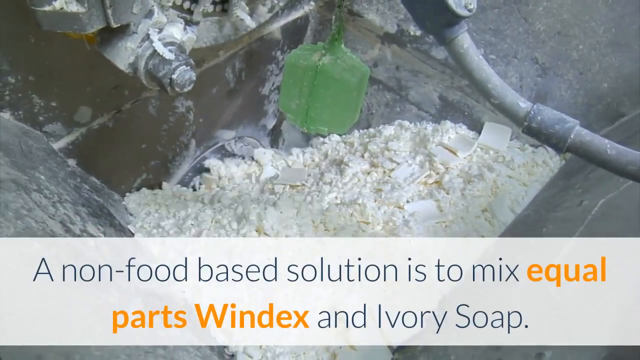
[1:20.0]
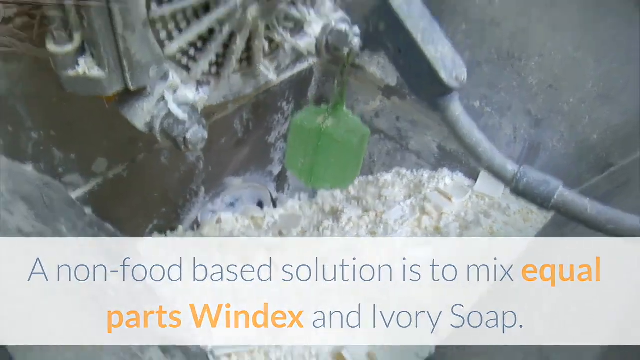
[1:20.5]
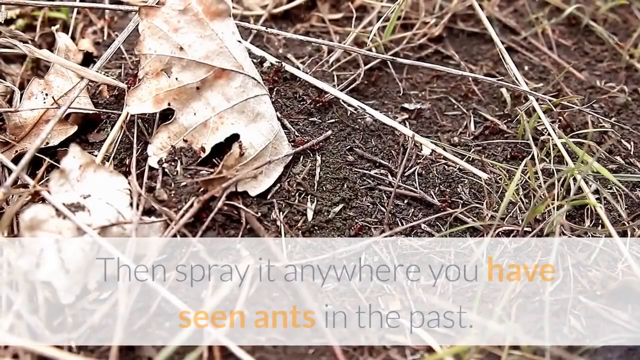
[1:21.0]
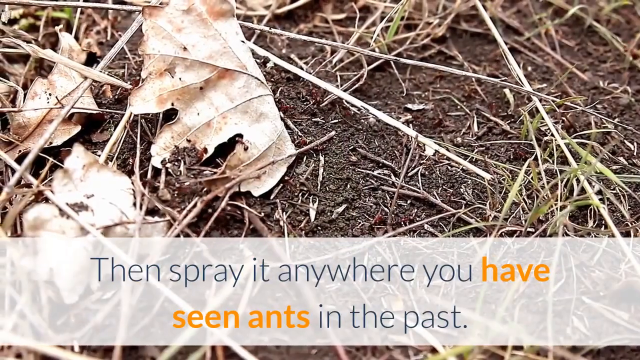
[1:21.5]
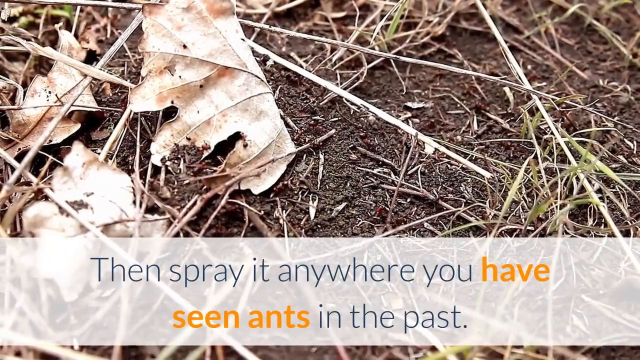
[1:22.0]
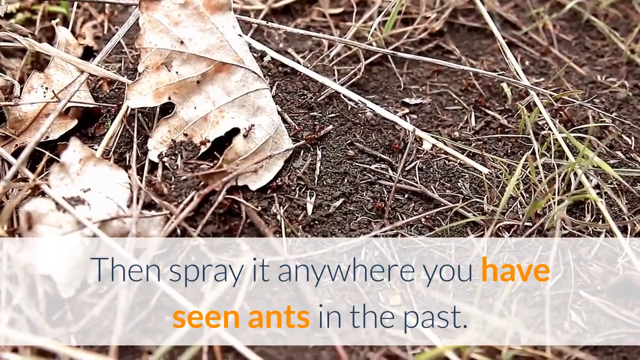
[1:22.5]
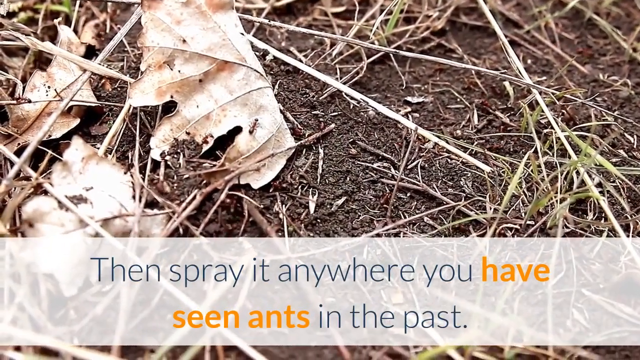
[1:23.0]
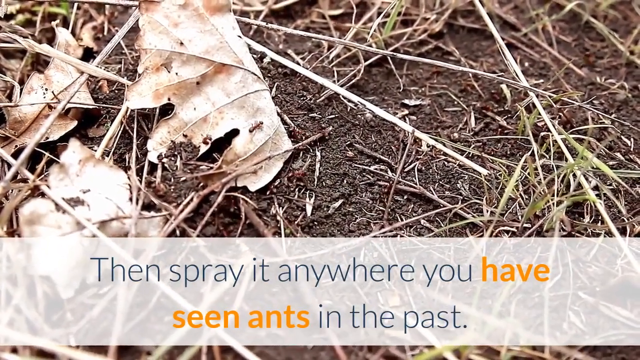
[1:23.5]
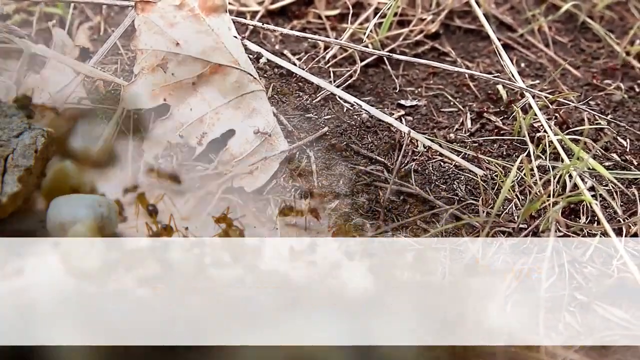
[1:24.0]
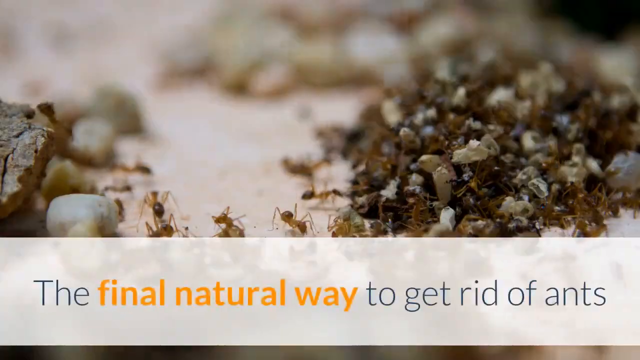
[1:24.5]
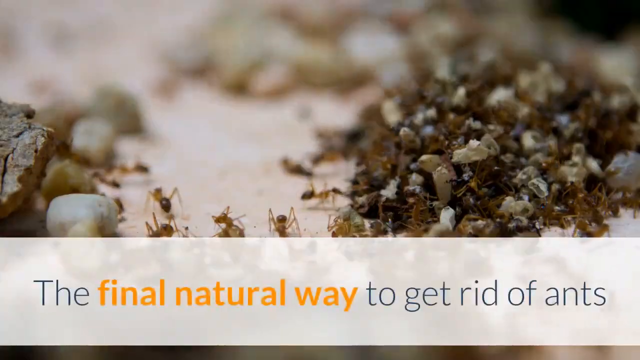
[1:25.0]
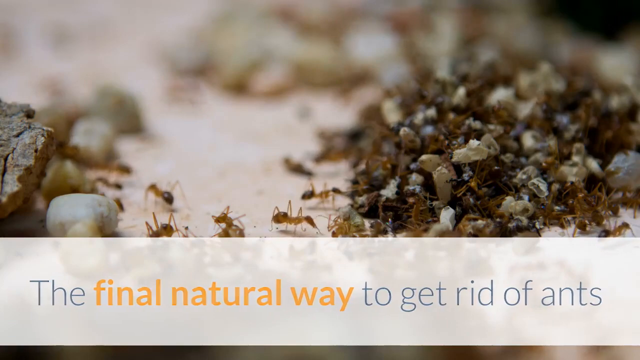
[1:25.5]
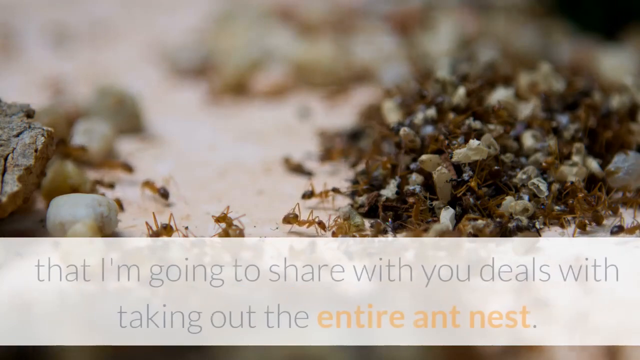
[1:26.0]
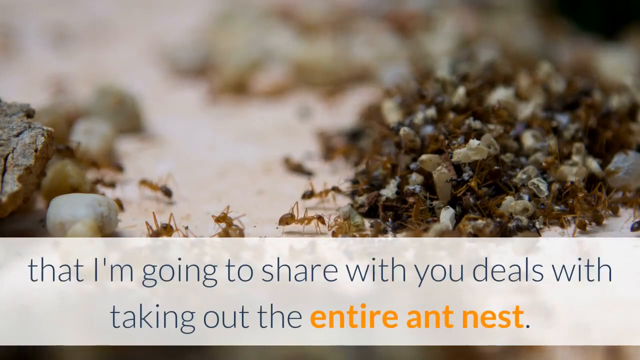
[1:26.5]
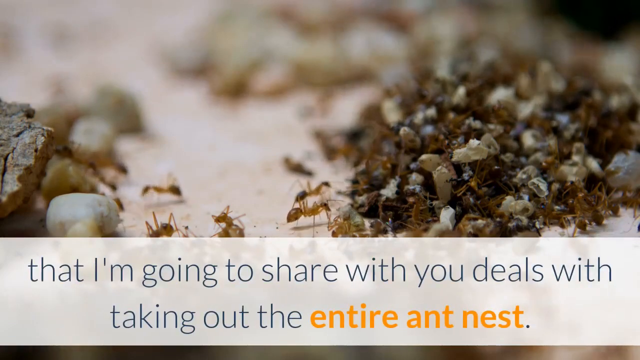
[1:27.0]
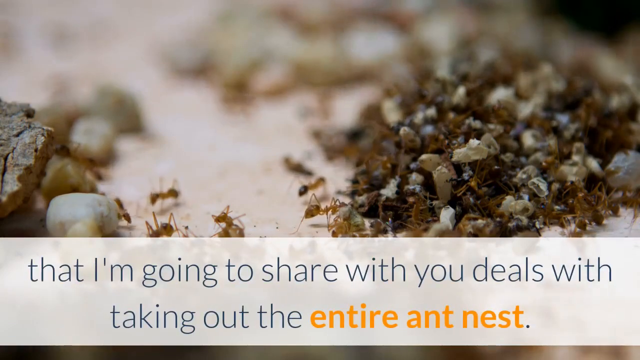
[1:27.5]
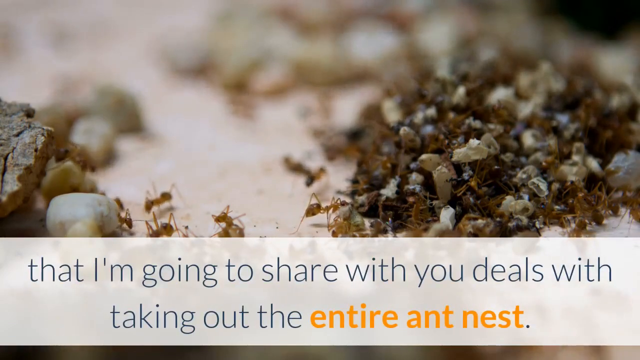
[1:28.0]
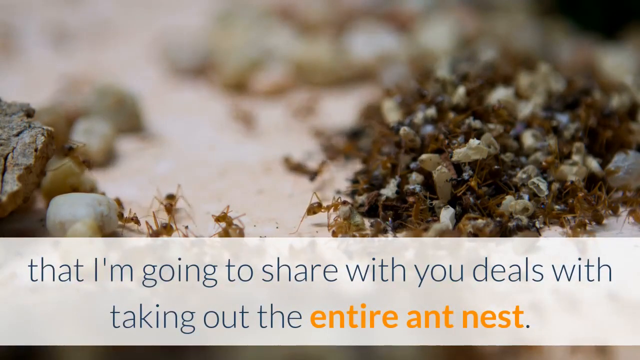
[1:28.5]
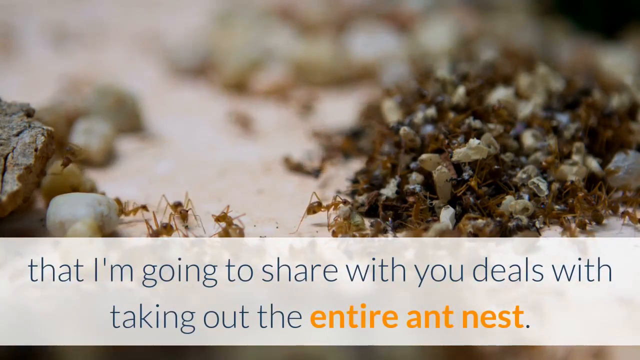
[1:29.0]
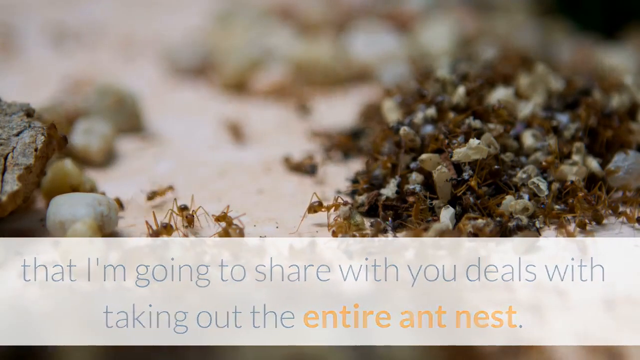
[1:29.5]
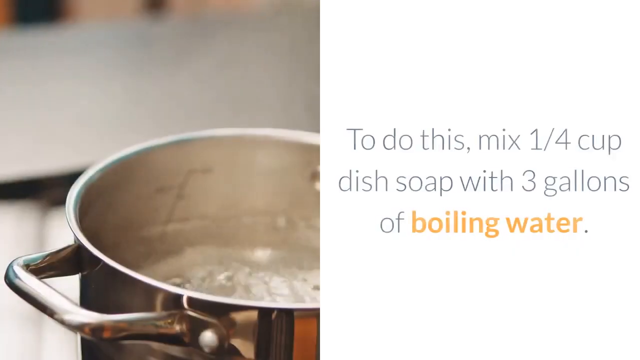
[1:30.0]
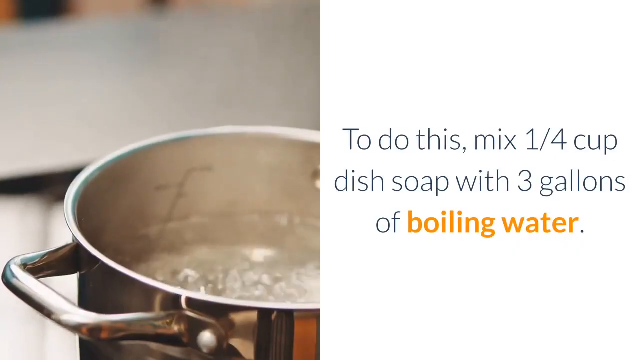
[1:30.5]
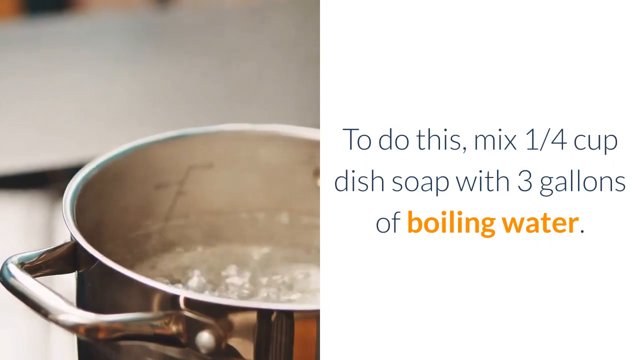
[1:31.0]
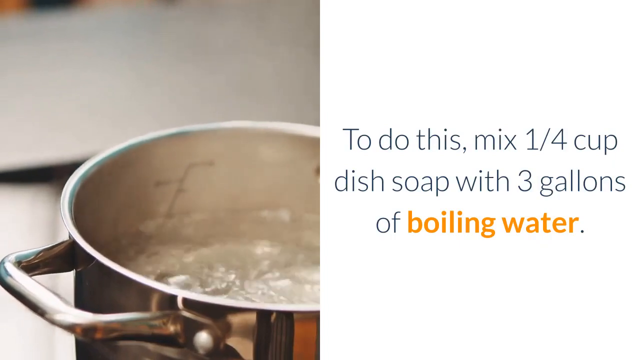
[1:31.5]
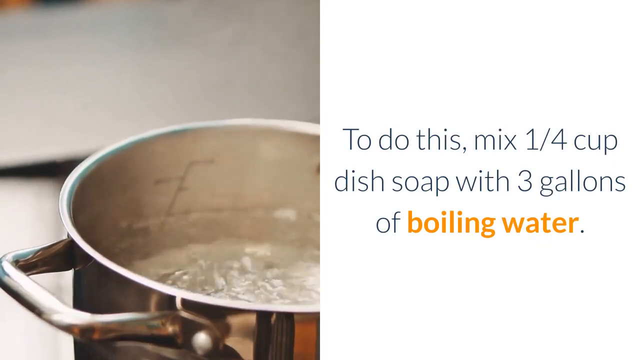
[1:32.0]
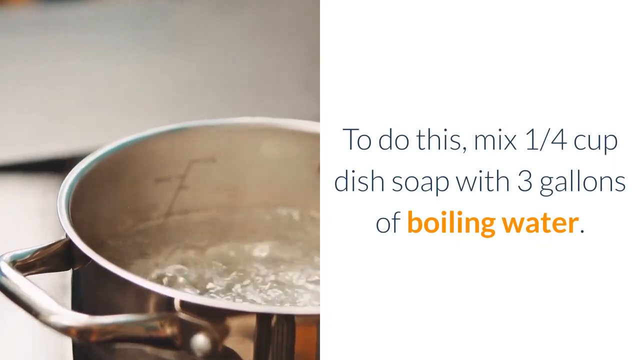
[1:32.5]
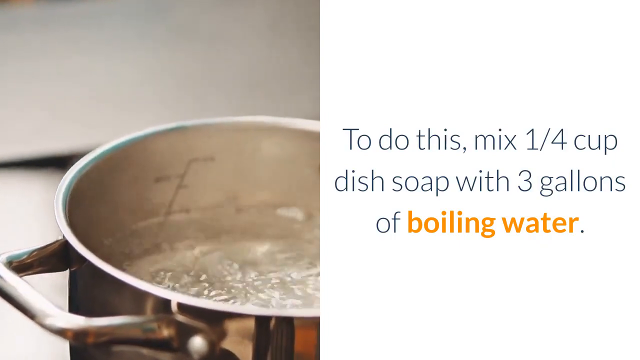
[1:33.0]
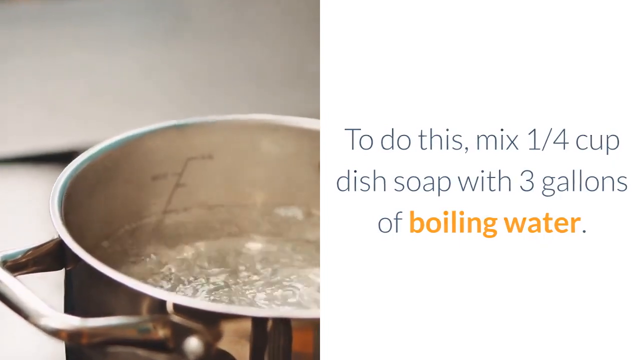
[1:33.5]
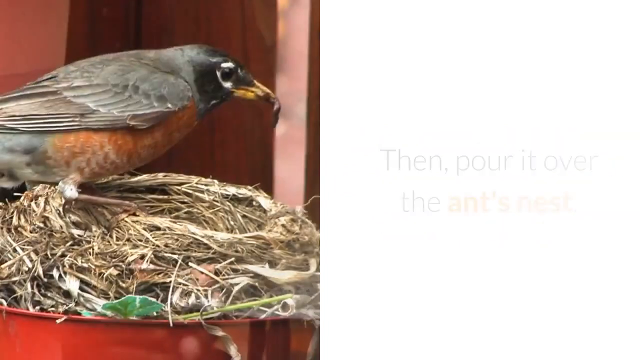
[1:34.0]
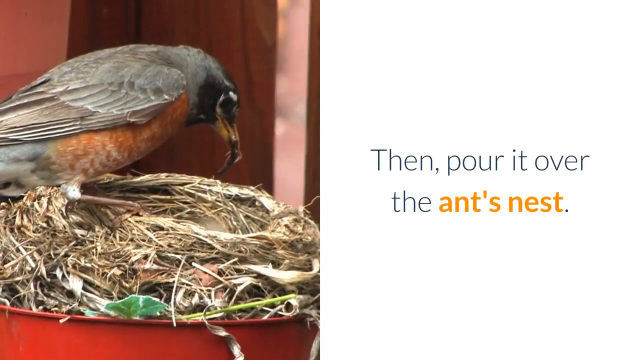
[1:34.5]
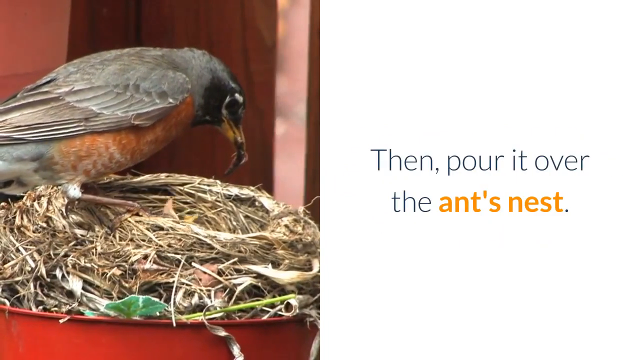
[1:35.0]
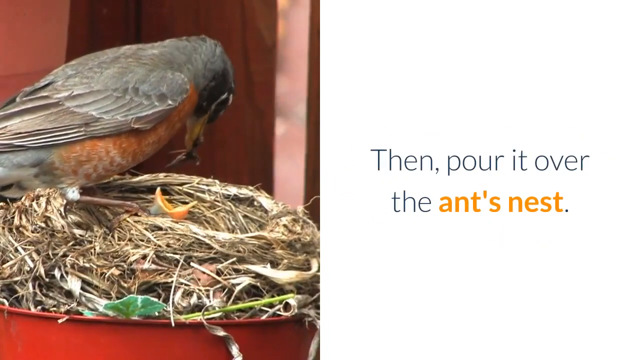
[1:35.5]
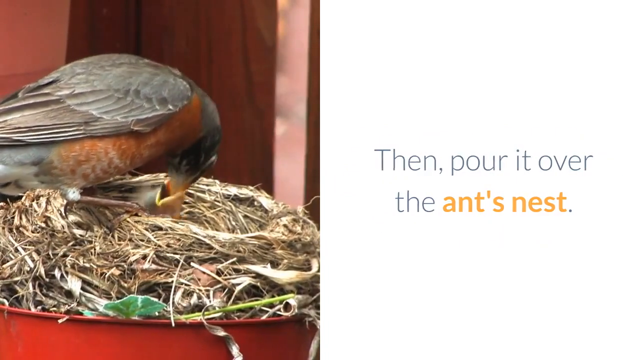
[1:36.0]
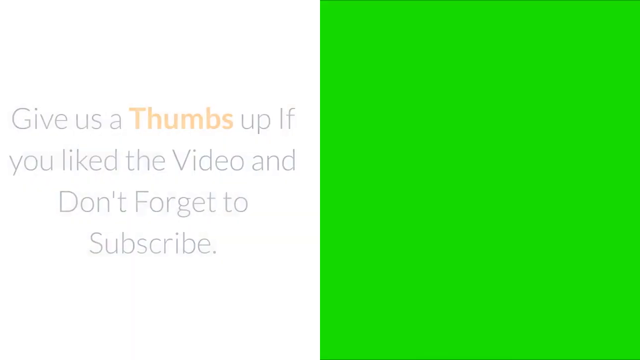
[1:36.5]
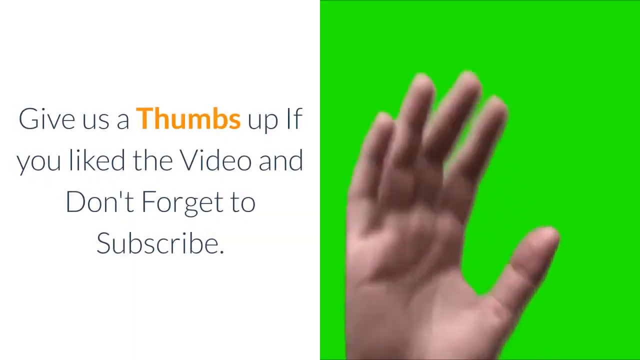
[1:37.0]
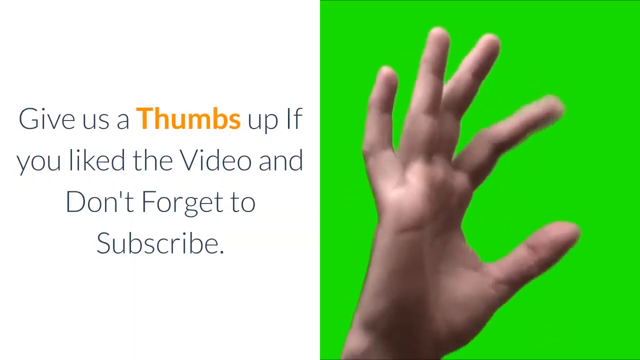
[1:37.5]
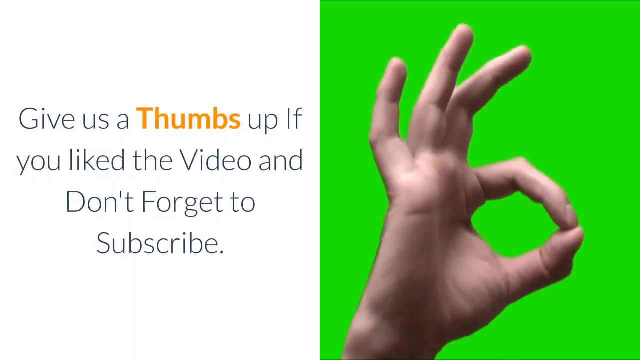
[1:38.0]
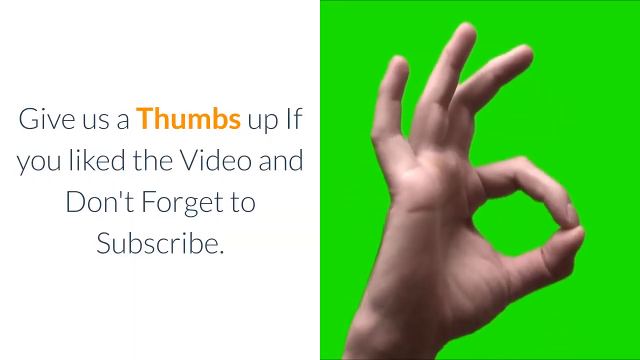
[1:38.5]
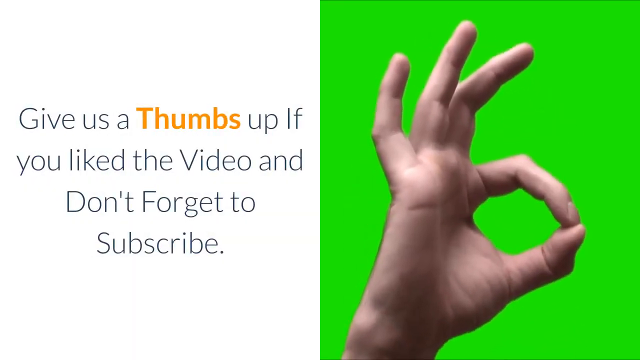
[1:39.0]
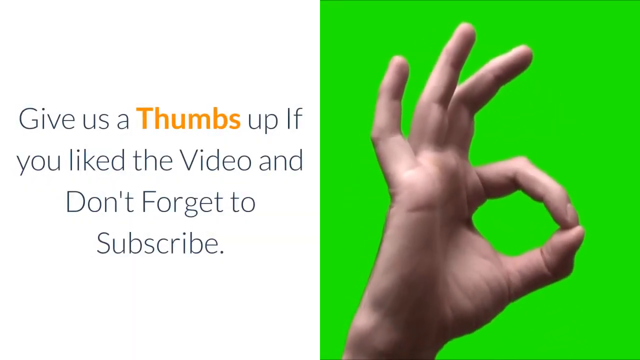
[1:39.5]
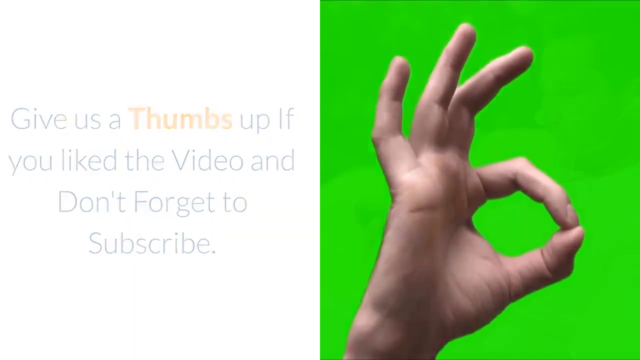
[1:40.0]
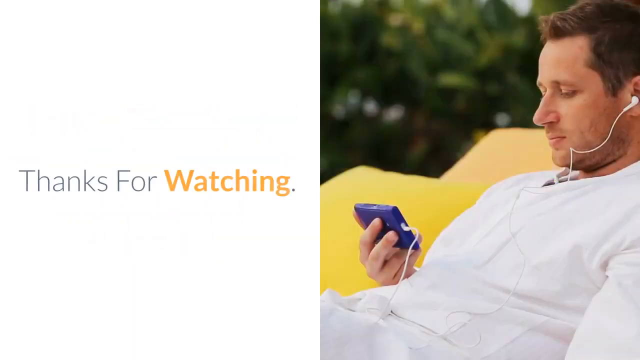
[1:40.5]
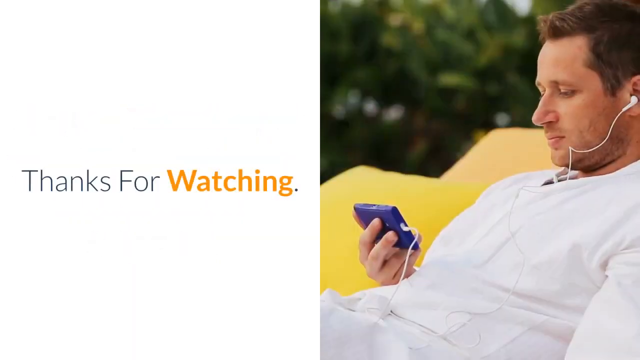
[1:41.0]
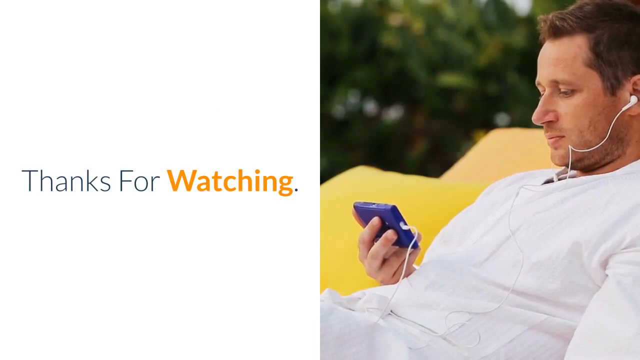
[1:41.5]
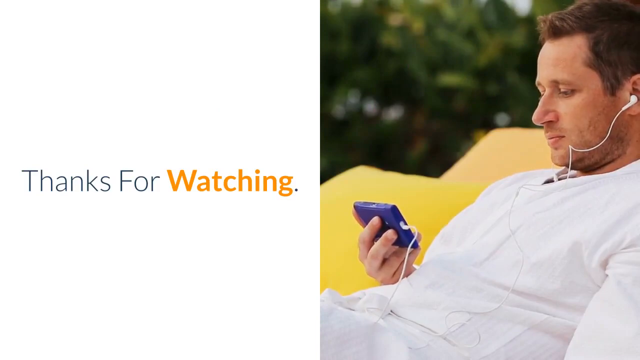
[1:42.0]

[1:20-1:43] Text describes the solution of mixing equal parts into a mixture while stuff is mixed together, and then ants appear on it. More text refers to spraying it where ants have been seen in the past. A close-up view of ants follows, and then text reads "the final way to get rid of ants," which involves taking out the entire ant nest by mixing 1 1/4 cups of dish soap and 3 gallons of boiling water and pouring it all over the ant nest. Text then reads "give us a thumbs up if you like the video, and don't forget to subscribe," while a hand on the right-hand side makes some kind of signal. Finally, "thanks for watching" appears on a white background on the left, with "watching" bolded in orange, and a guy just chills with his headphones in, looking at his phone and watching a video.